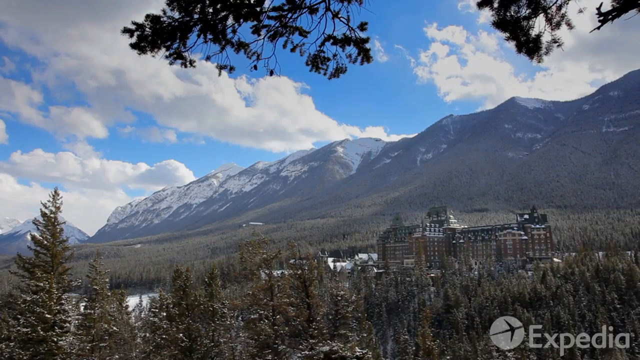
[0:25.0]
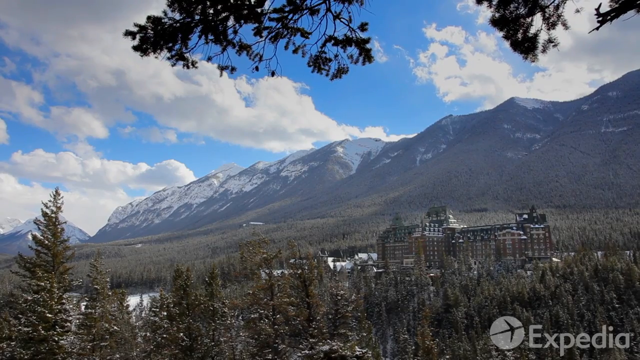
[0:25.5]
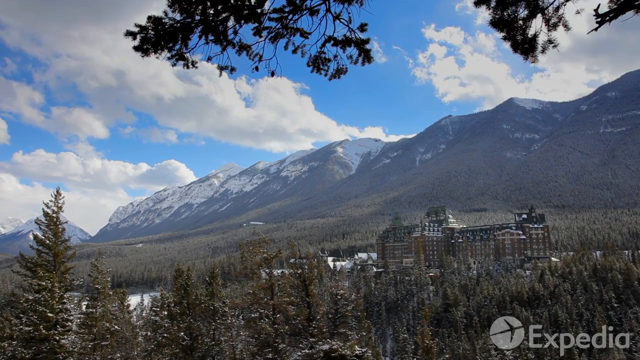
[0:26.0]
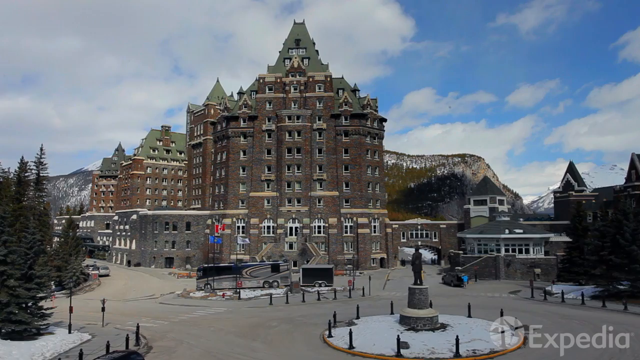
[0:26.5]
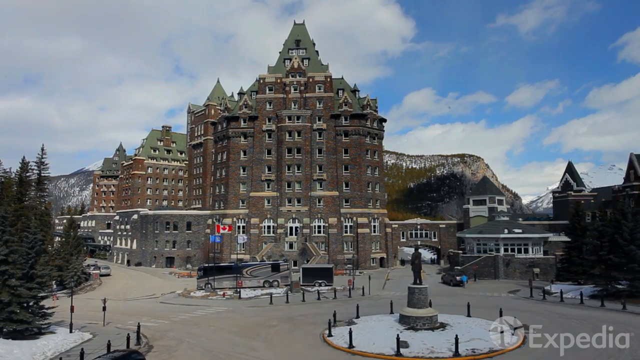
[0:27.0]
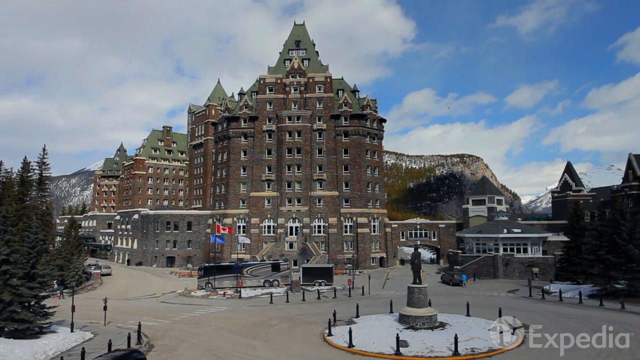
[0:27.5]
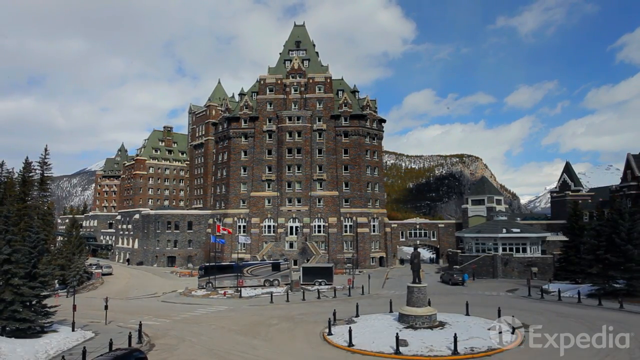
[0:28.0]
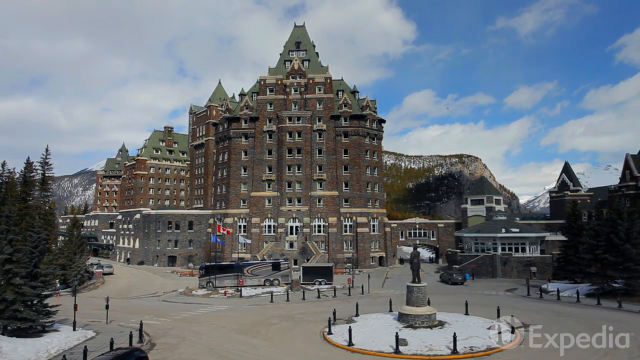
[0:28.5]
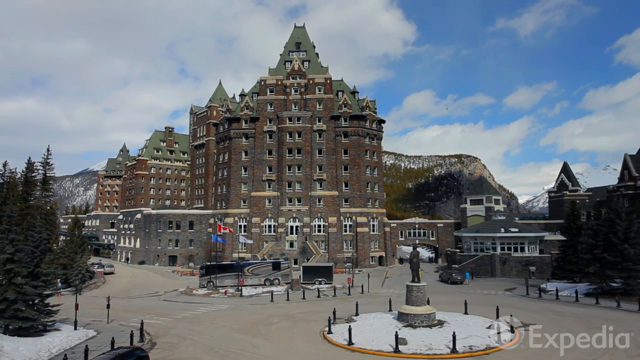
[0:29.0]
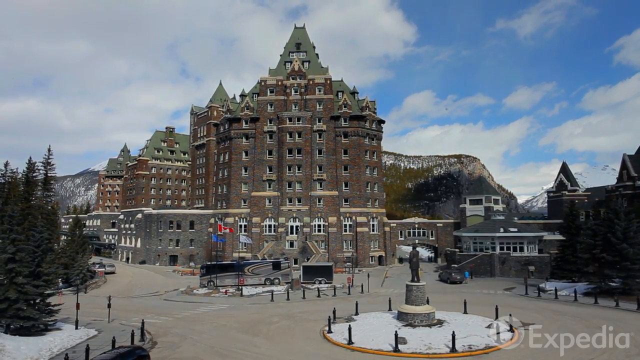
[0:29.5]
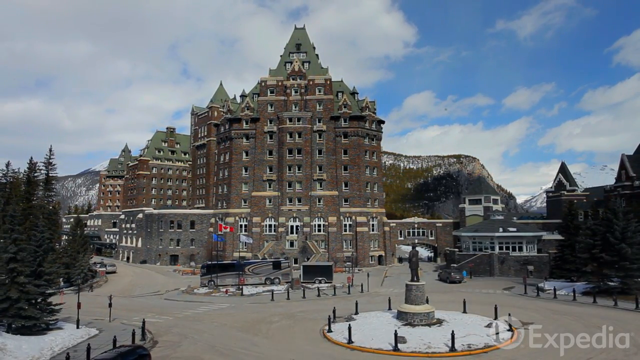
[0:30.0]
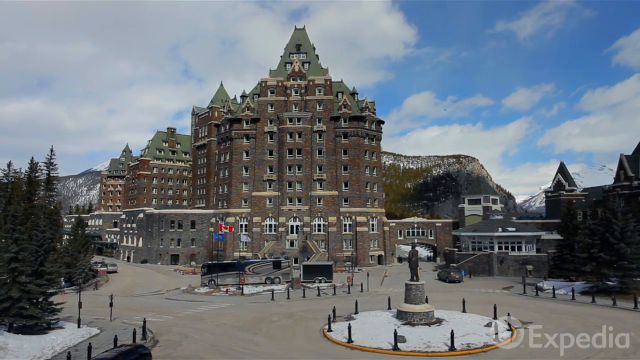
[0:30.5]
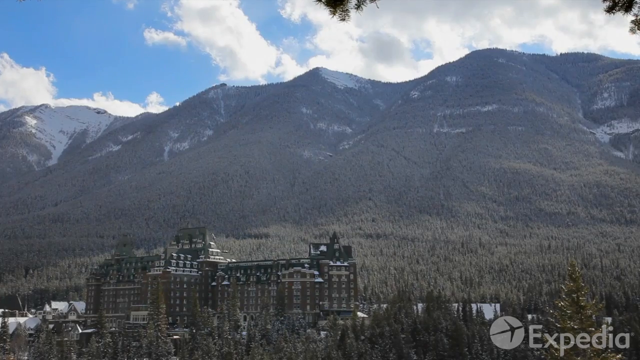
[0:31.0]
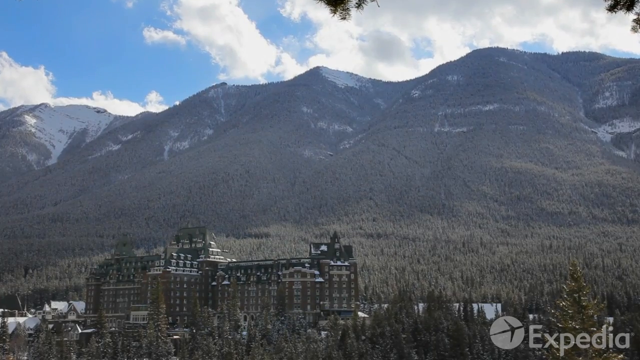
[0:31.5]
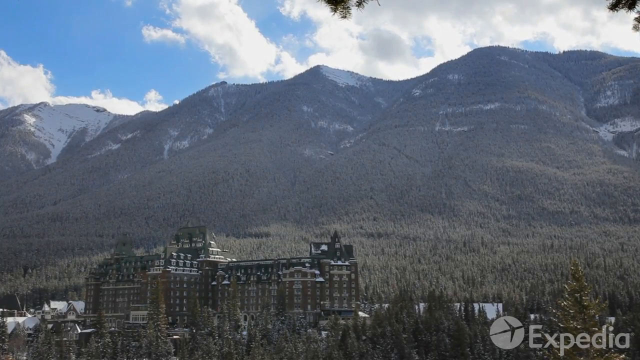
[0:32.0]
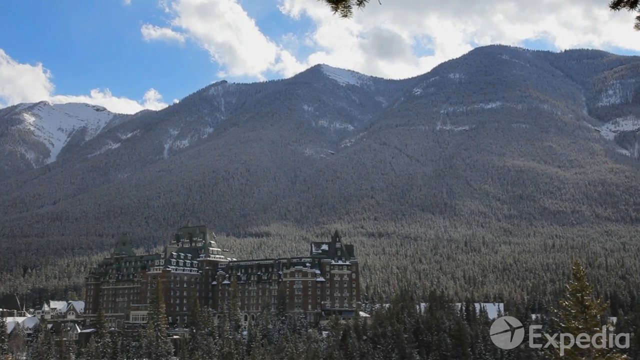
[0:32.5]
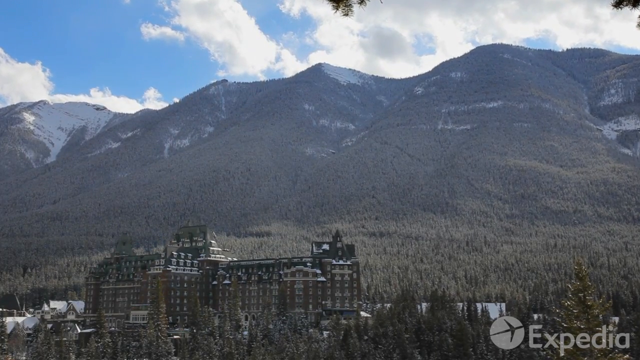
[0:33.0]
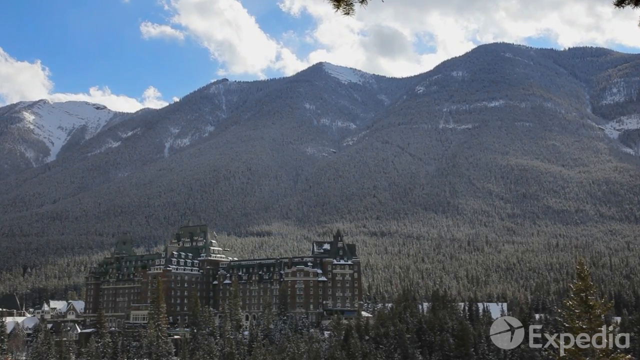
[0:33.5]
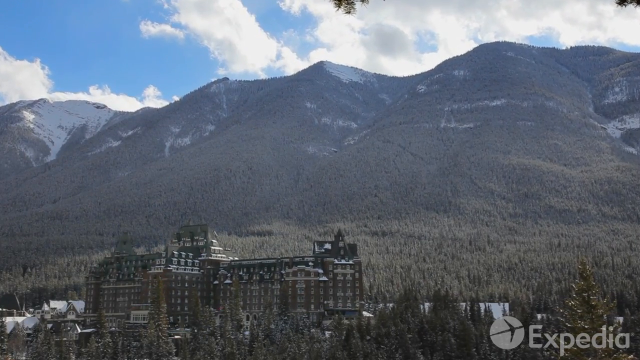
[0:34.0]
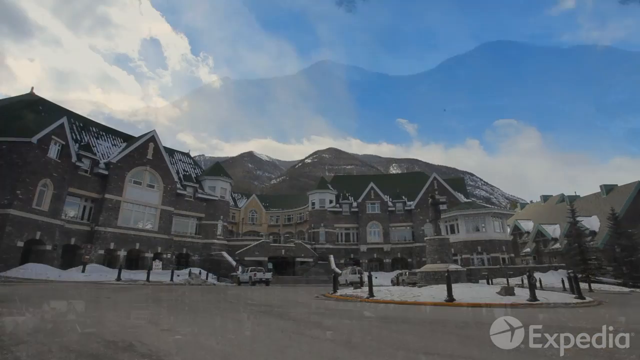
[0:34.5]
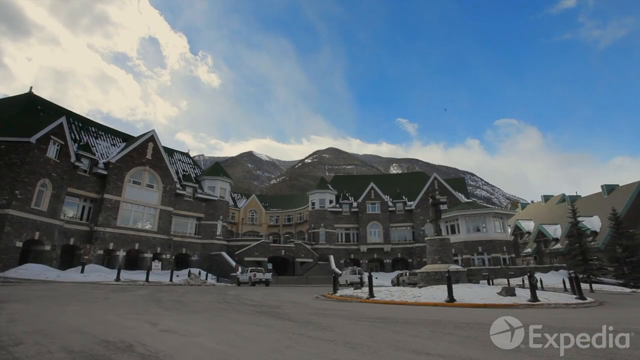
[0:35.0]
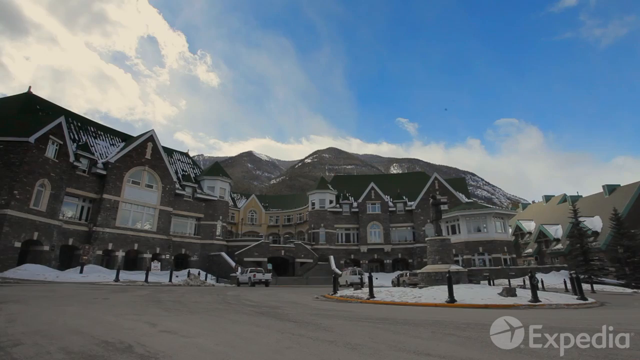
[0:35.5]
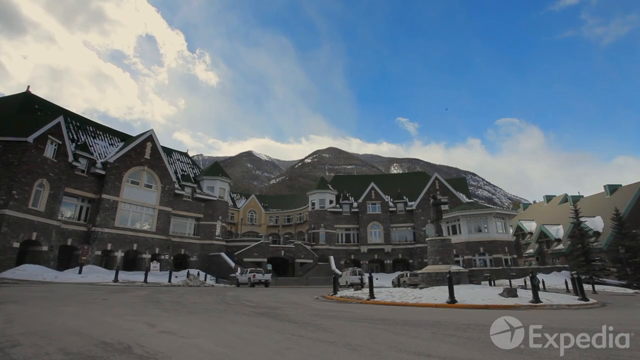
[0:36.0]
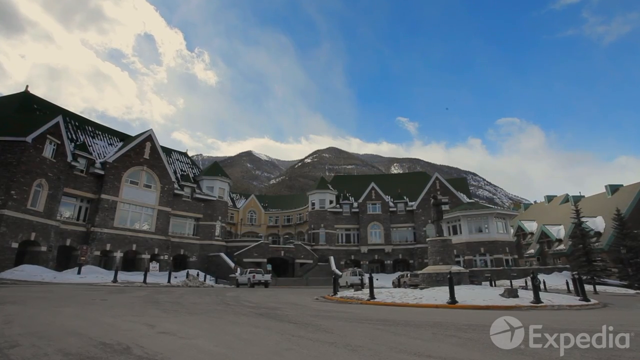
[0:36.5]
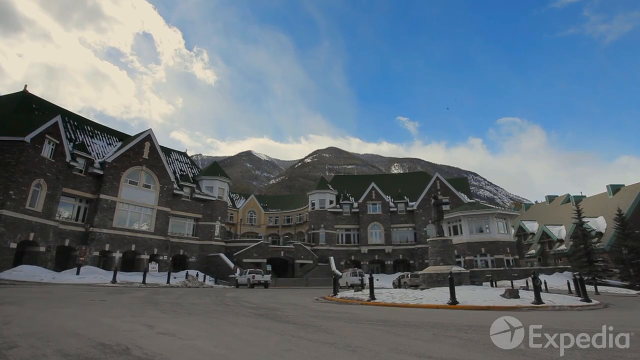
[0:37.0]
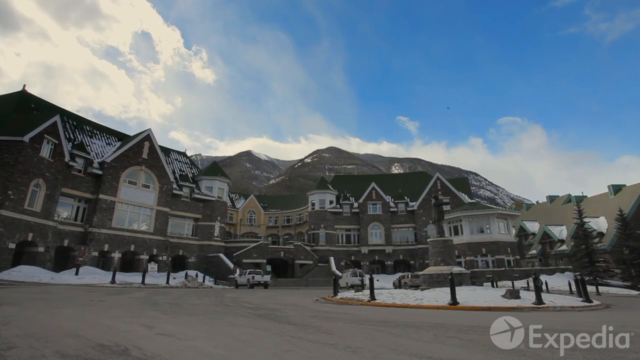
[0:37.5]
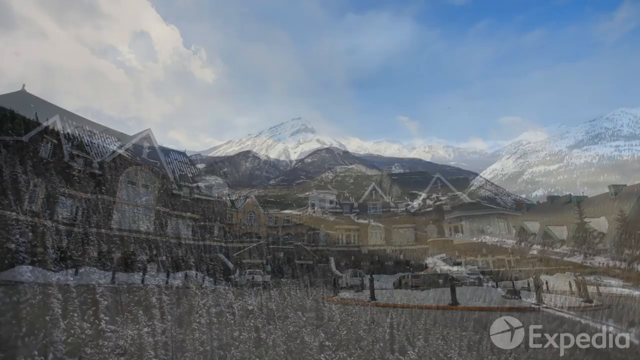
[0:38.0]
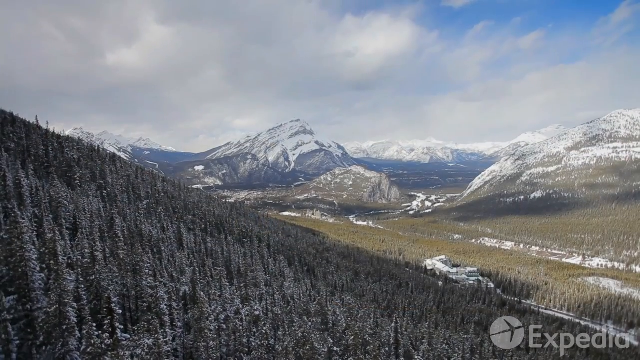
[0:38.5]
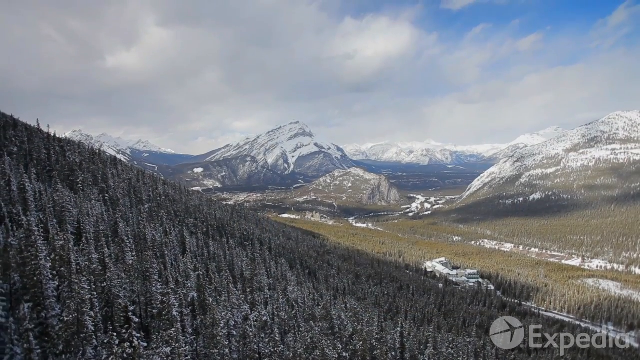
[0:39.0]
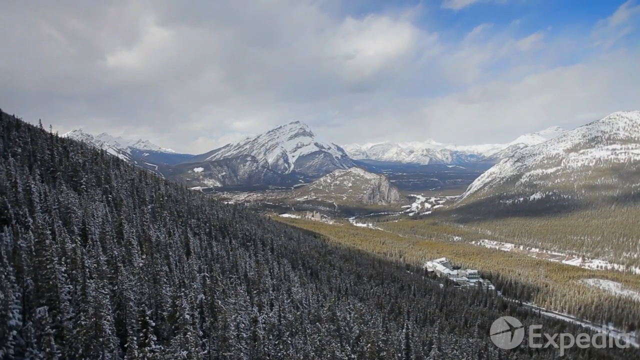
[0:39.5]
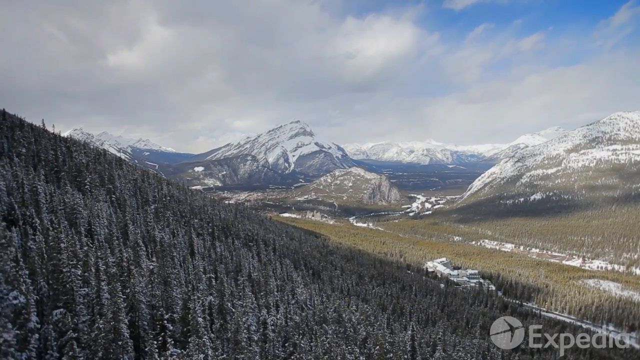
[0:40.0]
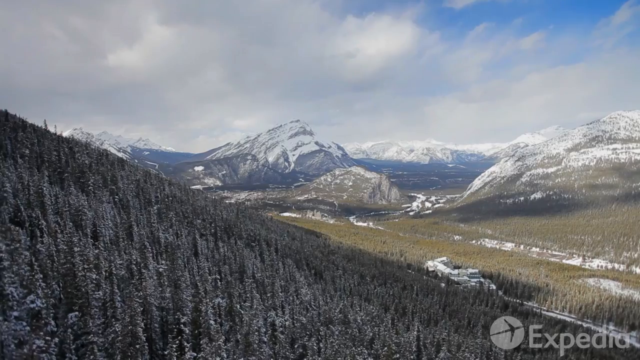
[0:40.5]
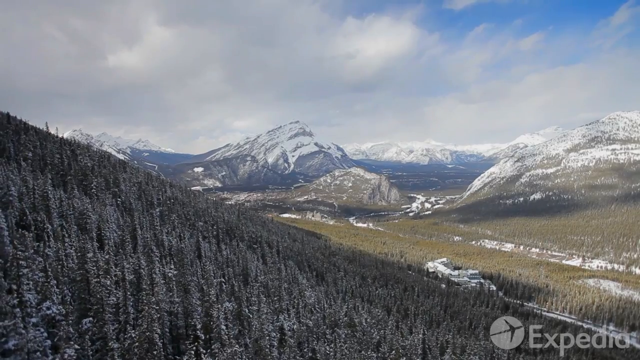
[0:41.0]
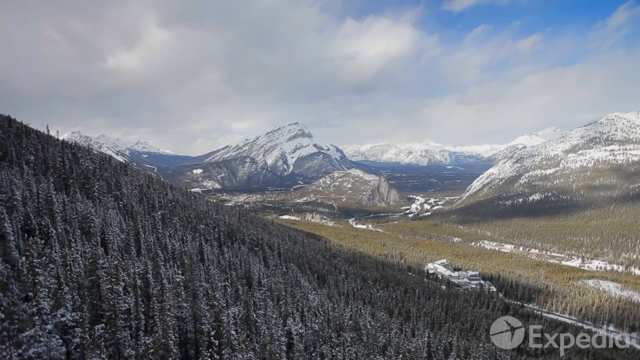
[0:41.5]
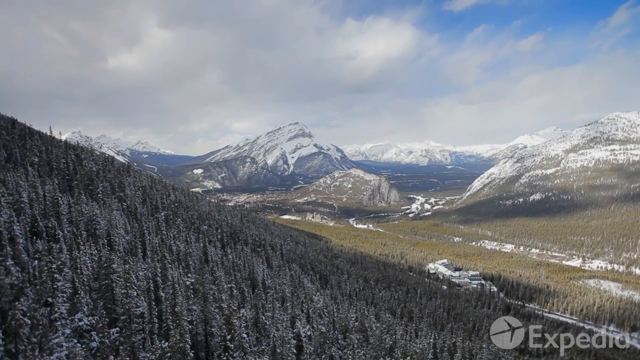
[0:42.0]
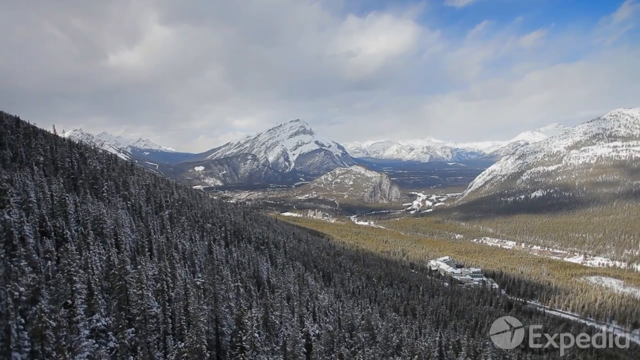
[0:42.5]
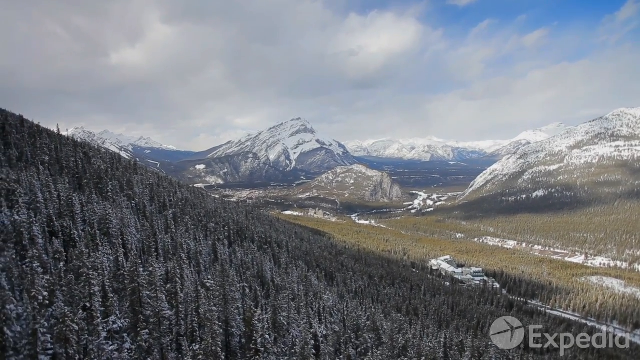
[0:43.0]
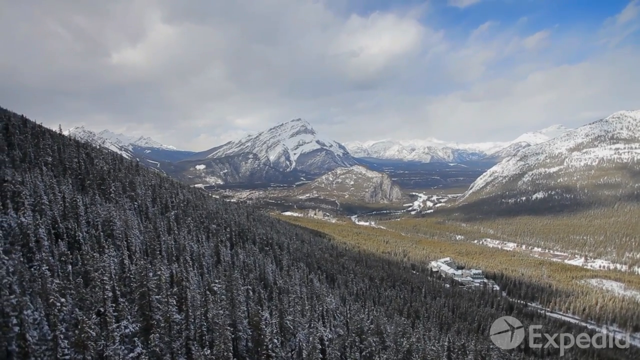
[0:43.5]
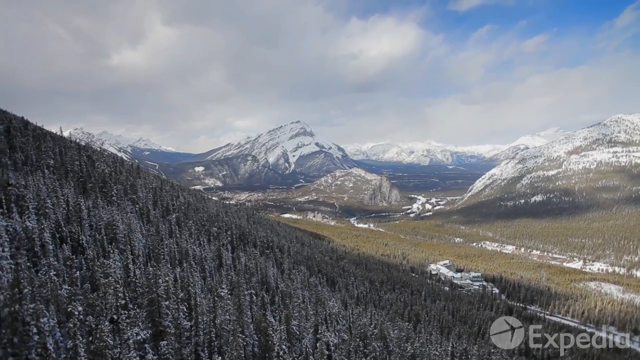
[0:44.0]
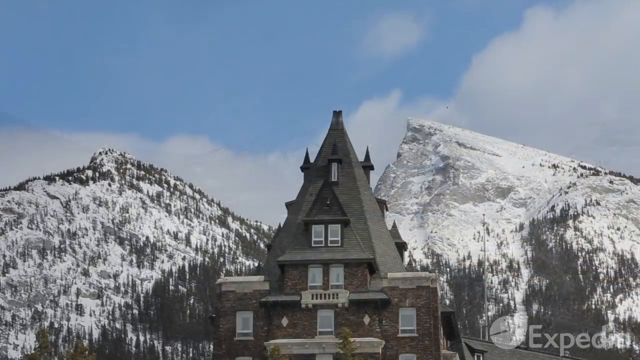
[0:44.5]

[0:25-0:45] The scene shows mountains, blue sky, clouds and the building in the background, with a large number of trees surrounding the area. A different shot shows the building: a very large, multi-story brick building with a green roof. A Canadian flag is in the front, with a couple more flags next to it. A large bus is parked in front of the building. There is a building to the right of the large brick building, a sculpture in the front, and a concrete area to drive around. More trees are on the left, and the mountains are still visible in the background. A new view shows the building in front of the mountains. Then a new building is shown; it is quite large, with a few trucks parked in front of it and a sculpture nearby. The video then pans up above the trees near the mountains, getting higher and higher before showing the top of one of the buildings with the mountains in the background.